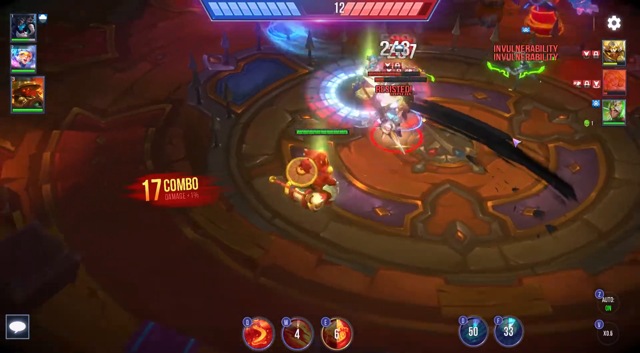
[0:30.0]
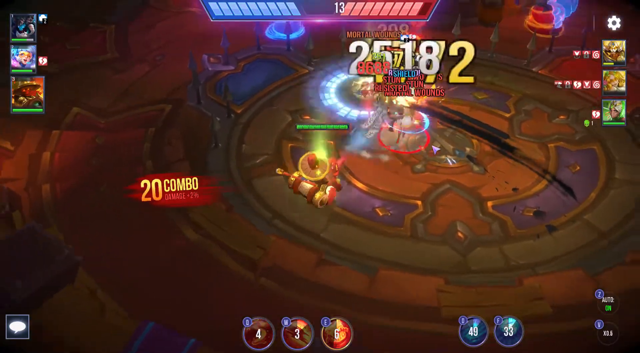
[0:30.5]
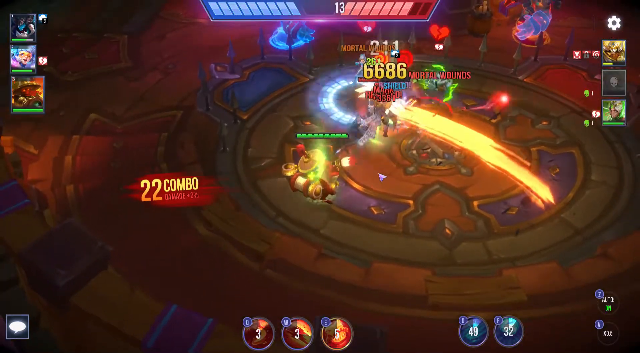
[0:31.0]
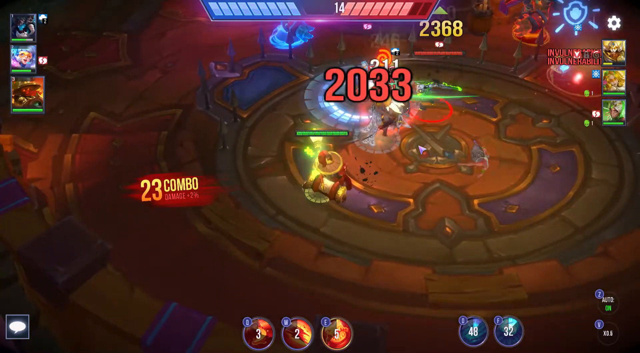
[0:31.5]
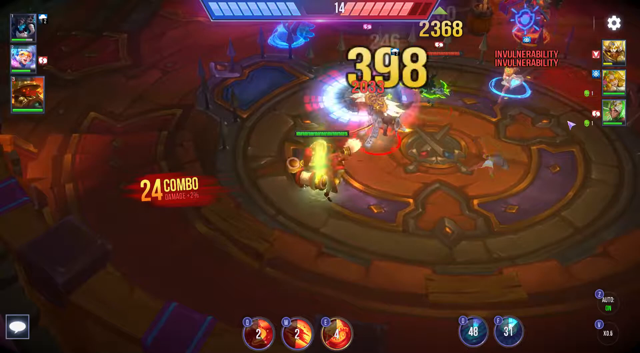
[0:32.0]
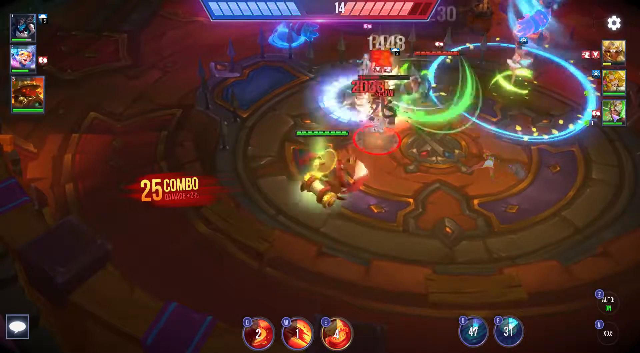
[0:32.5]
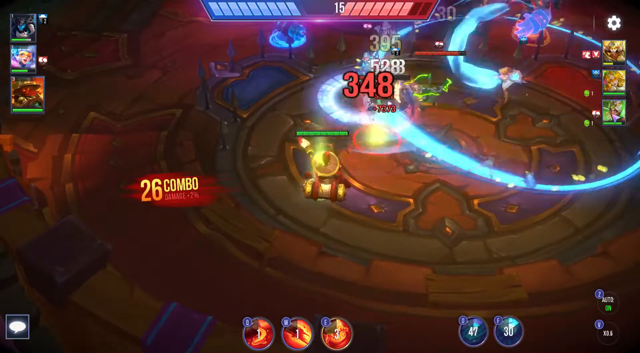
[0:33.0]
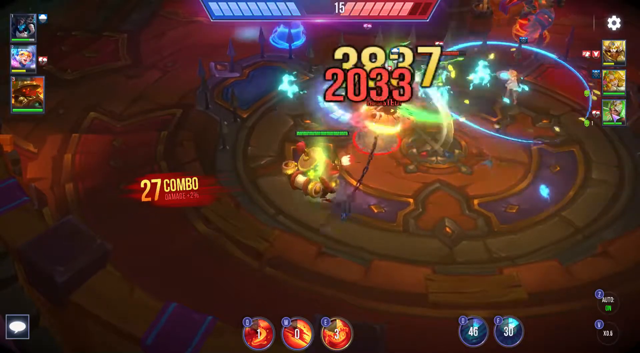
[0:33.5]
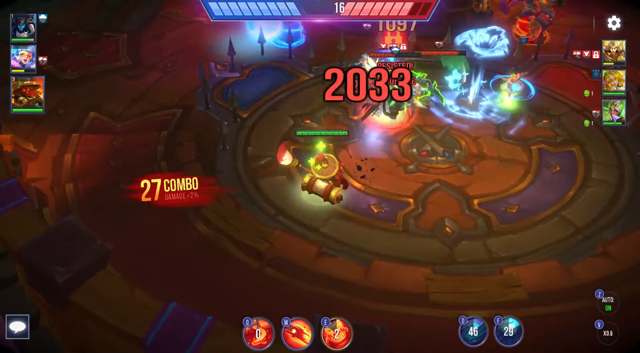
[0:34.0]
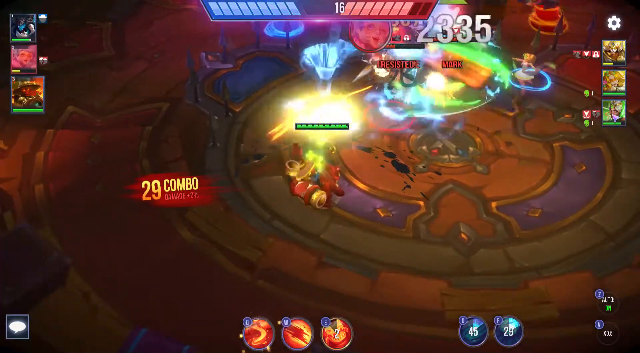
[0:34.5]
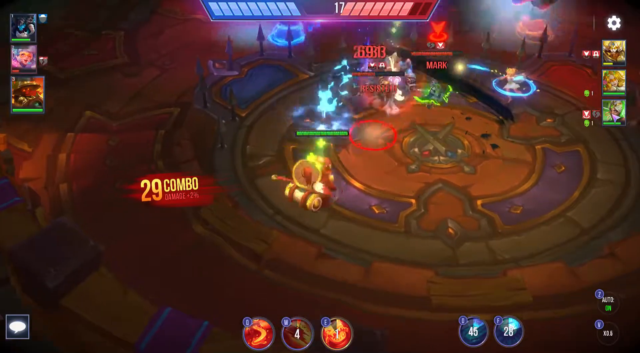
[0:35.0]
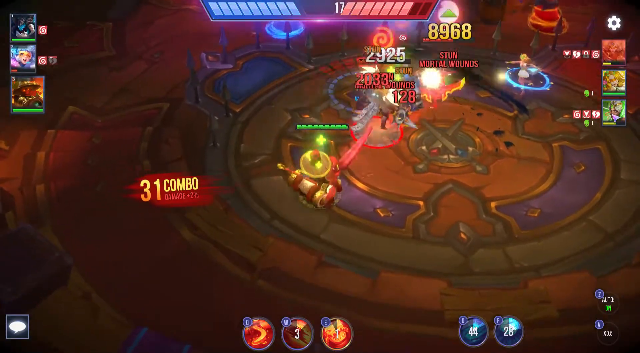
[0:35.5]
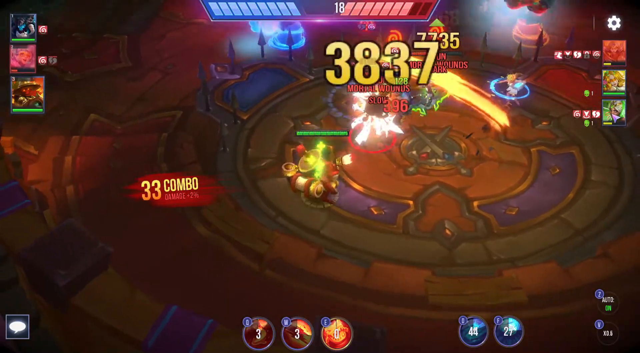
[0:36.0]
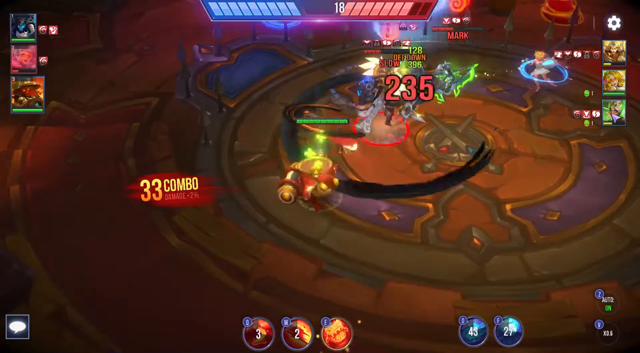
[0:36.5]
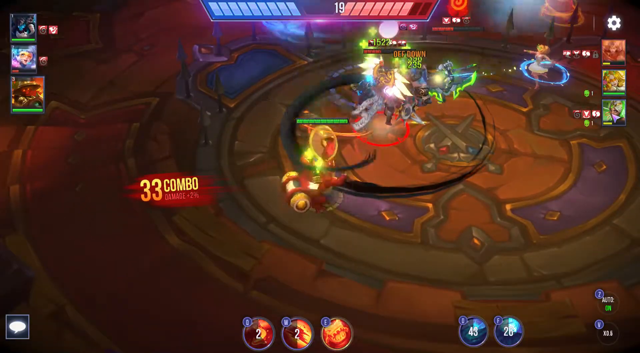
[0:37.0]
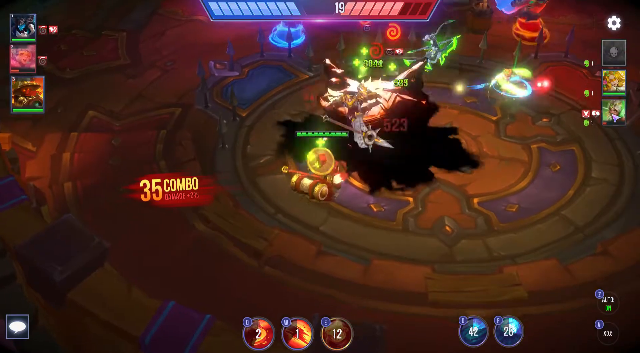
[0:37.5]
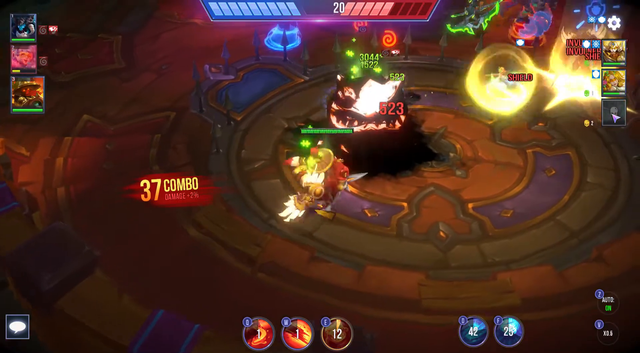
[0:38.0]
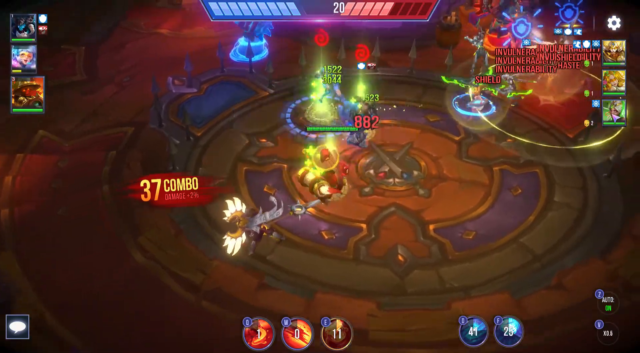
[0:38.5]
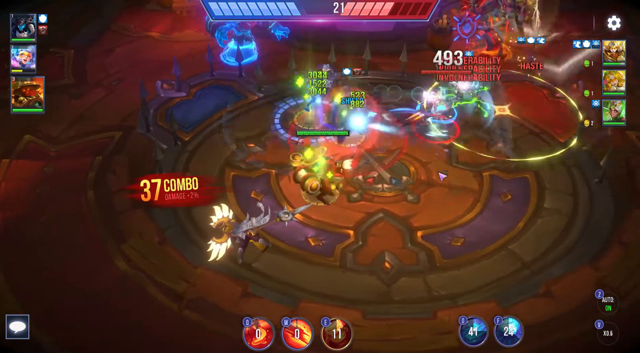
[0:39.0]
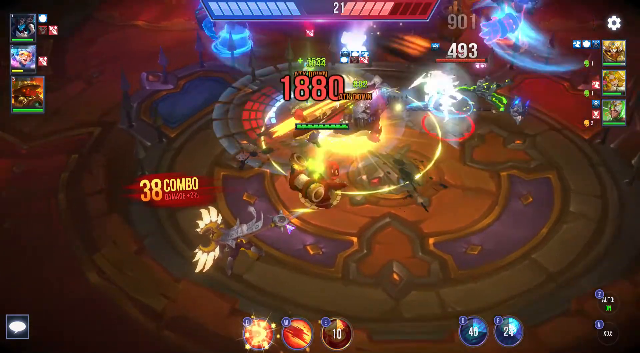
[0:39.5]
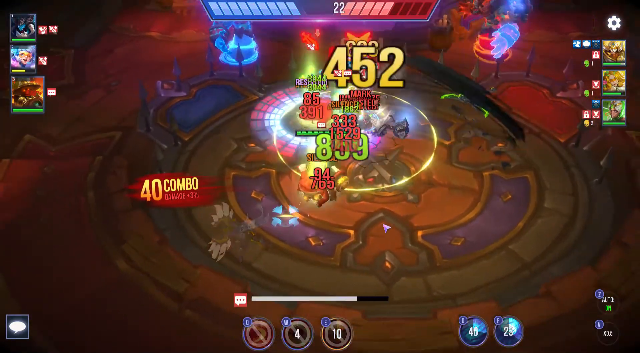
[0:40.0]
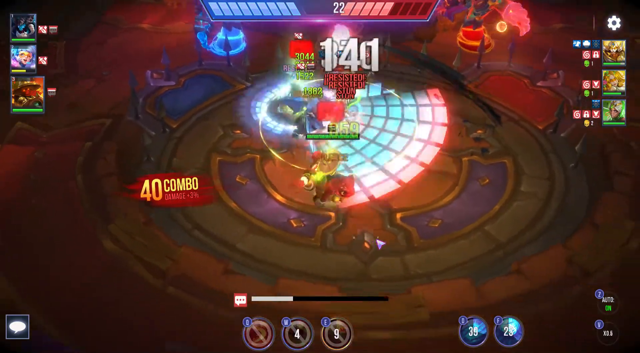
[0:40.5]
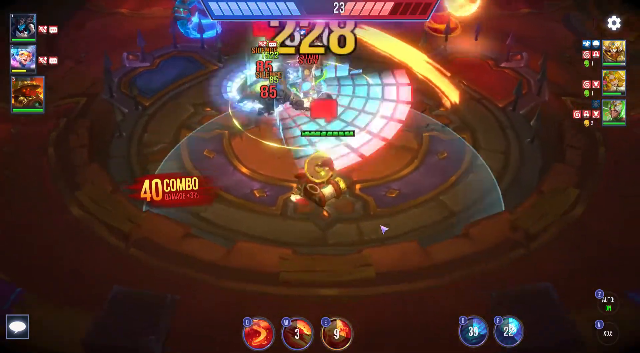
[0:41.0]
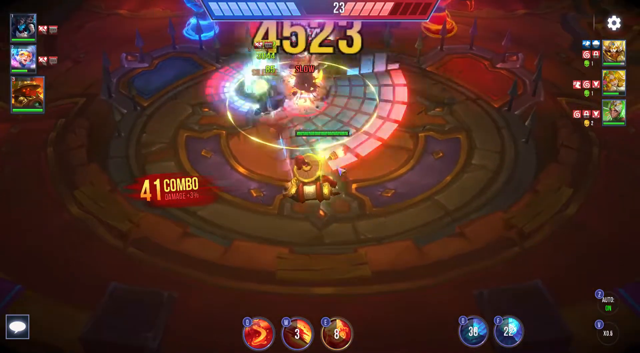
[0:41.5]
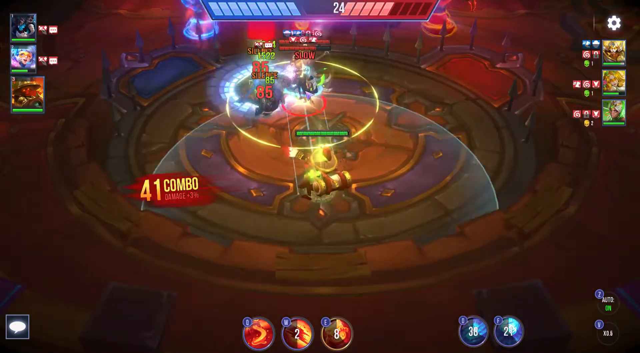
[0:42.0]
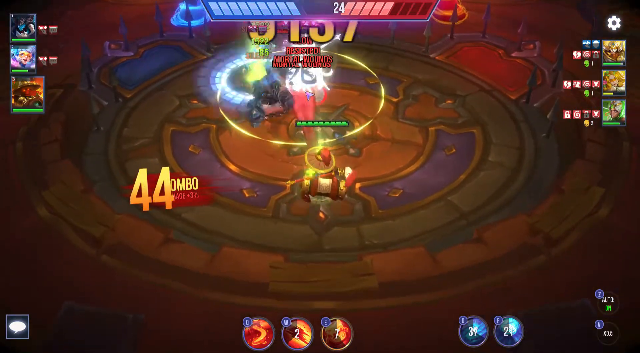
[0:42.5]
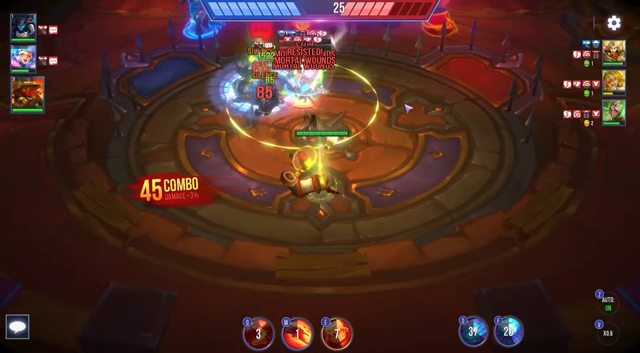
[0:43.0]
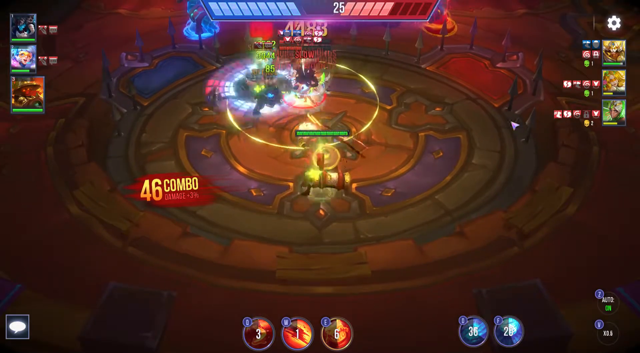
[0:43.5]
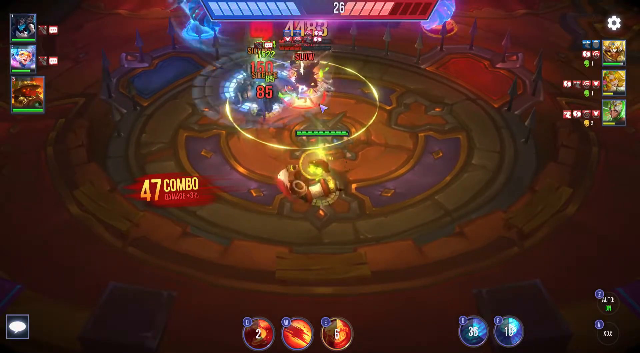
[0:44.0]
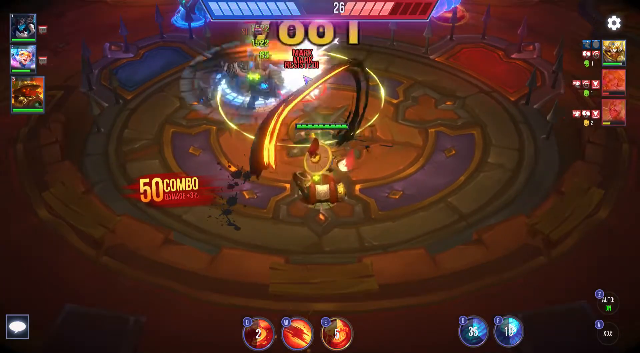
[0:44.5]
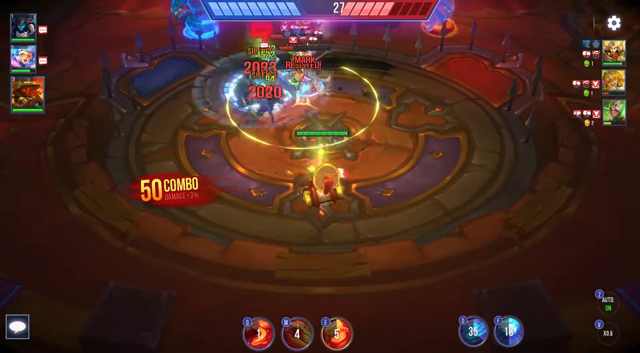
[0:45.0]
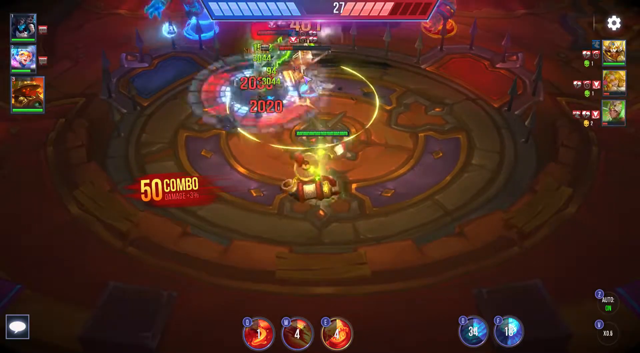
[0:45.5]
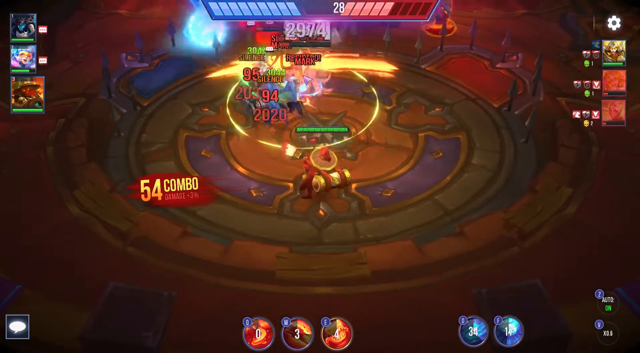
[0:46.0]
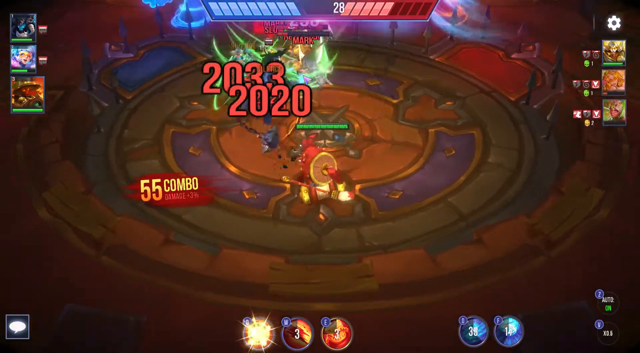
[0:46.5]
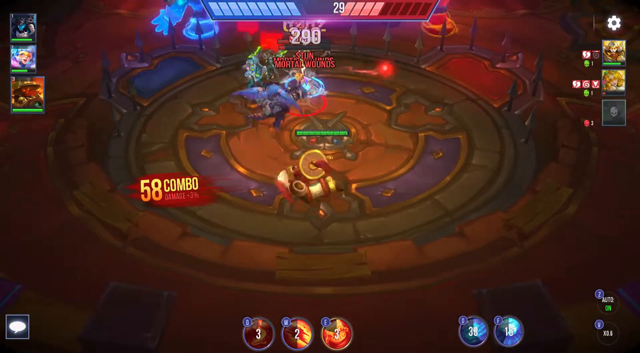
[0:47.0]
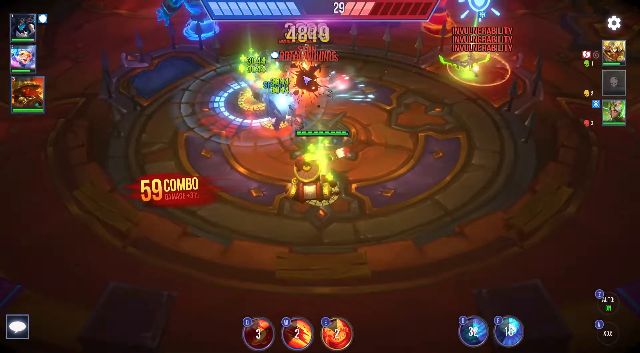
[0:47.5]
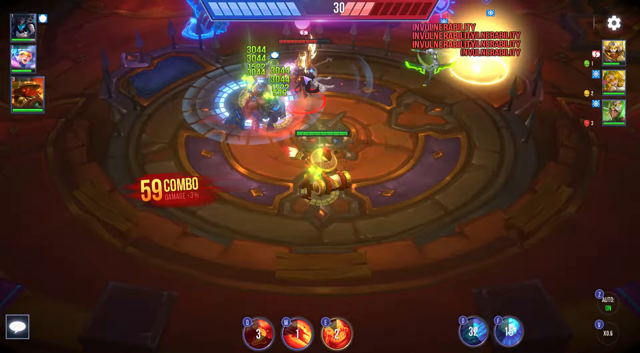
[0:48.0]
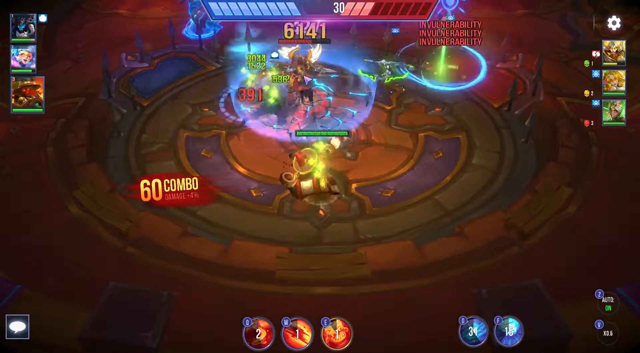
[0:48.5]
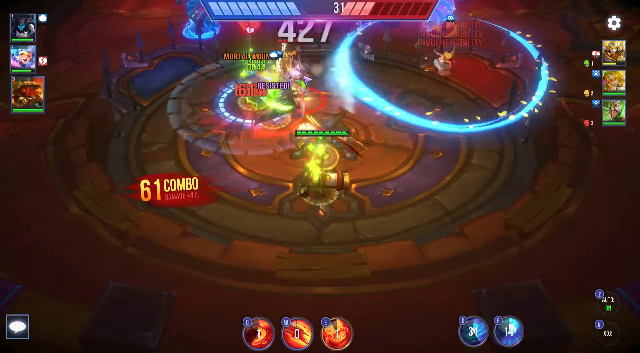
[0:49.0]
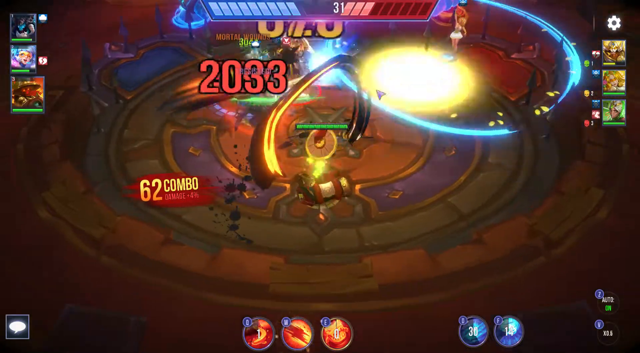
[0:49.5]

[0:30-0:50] Someone appears to be streaming a video game with animated 3D characters. It looks like a fighting game, with apparently two or three characters fighting each other. The characters are somewhat small, and it is unclear whether they are people or animals; they appear to be shooting energy beams. Glowing circles surround them, seemingly indicating energy being taken out each time someone is hit, and amounts of damage and points scored appear across the screen. It is unclear how many are fighting, or whether these are all main characters or a couple of characters fighting non-playing characters. At least one character on the left appears to be fighting many other characters and appears to be on something like a horse; mostly the back of this character is visible, and it looks like it is not human, possibly an animal of some sort.